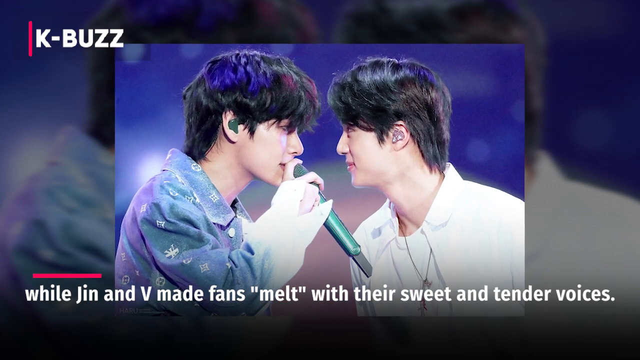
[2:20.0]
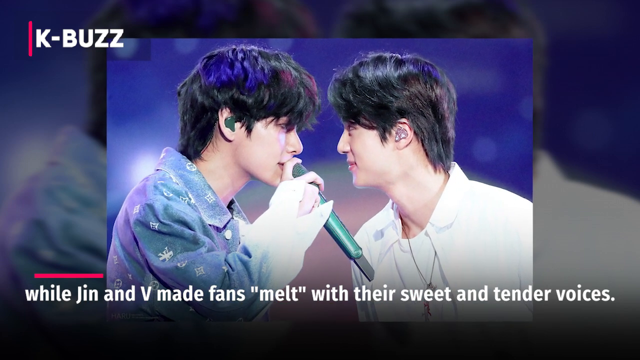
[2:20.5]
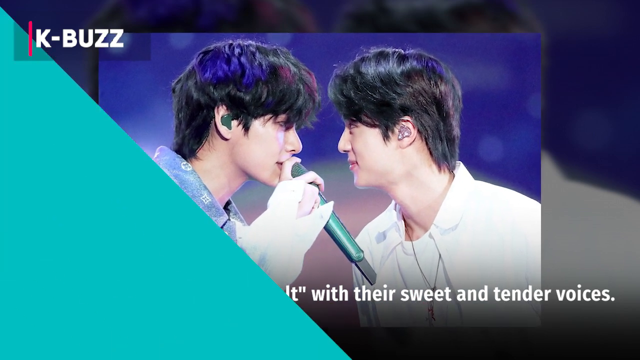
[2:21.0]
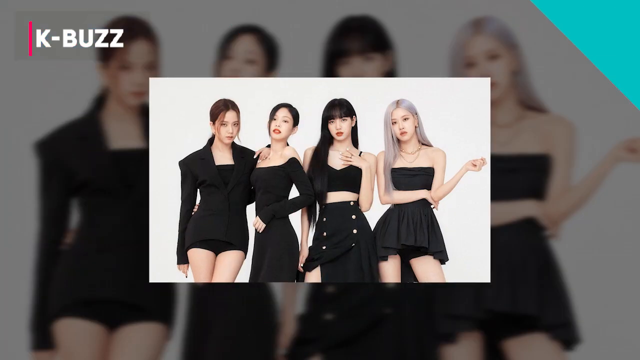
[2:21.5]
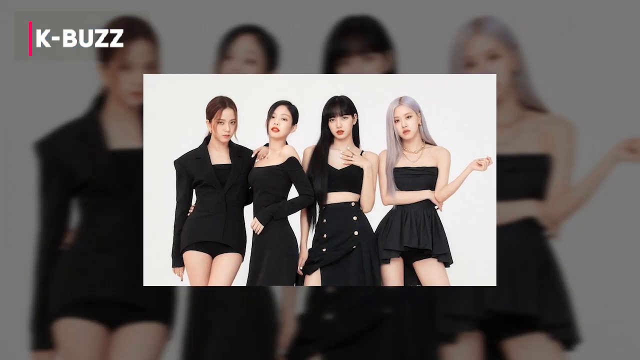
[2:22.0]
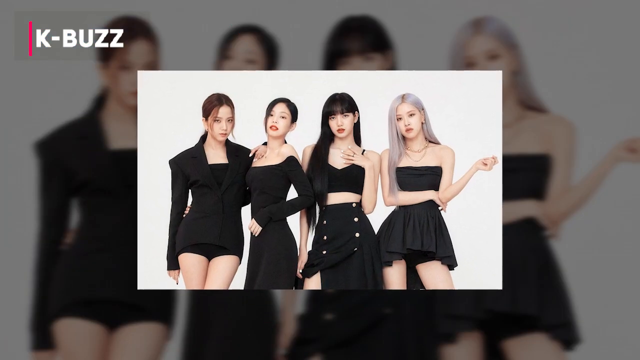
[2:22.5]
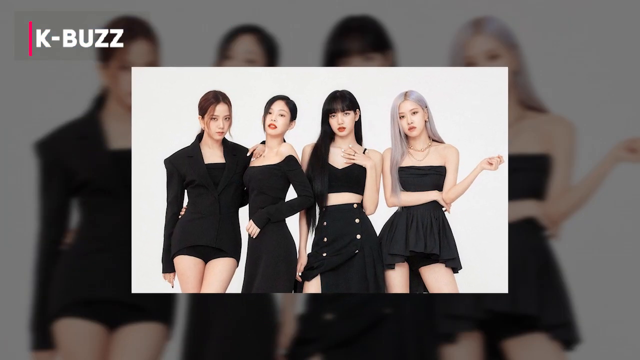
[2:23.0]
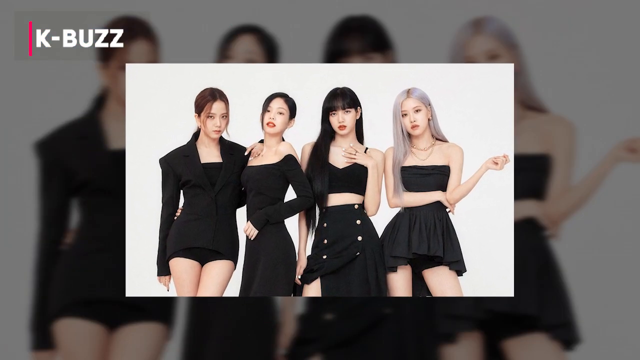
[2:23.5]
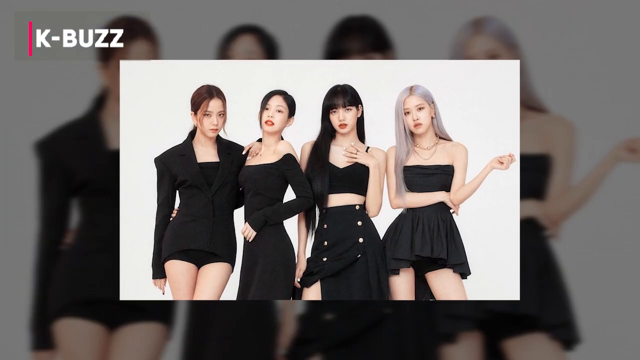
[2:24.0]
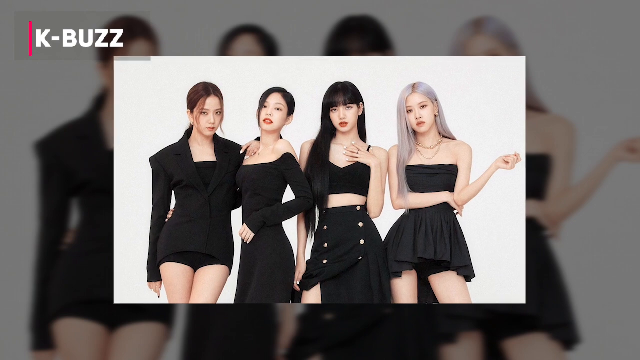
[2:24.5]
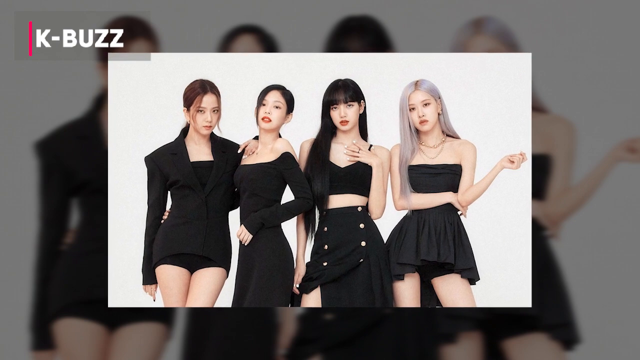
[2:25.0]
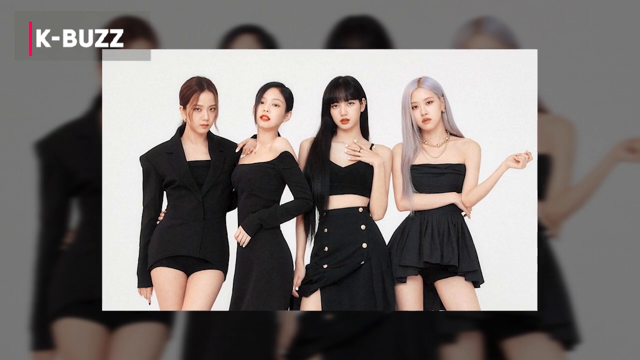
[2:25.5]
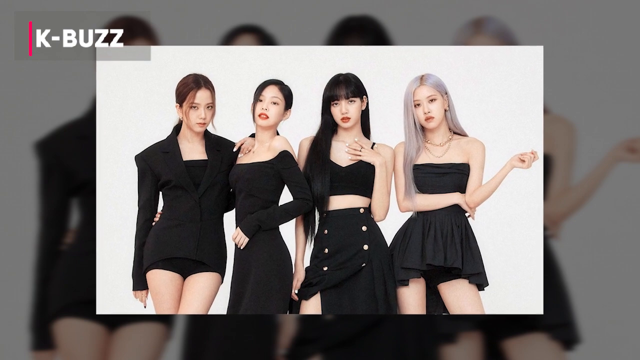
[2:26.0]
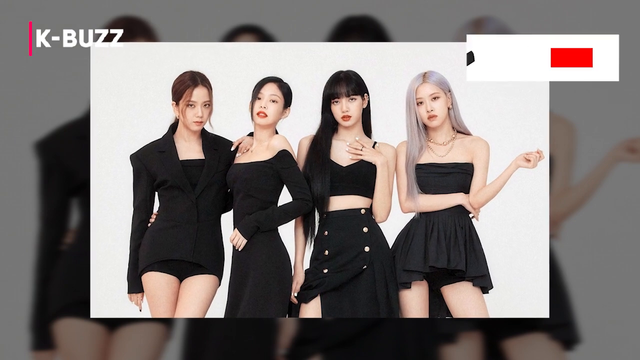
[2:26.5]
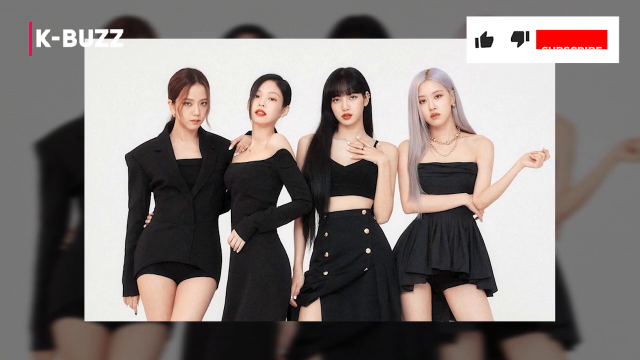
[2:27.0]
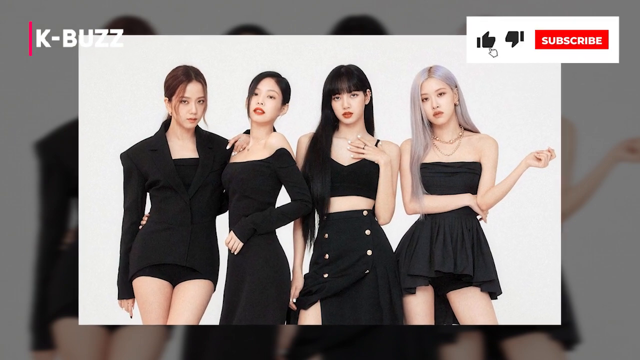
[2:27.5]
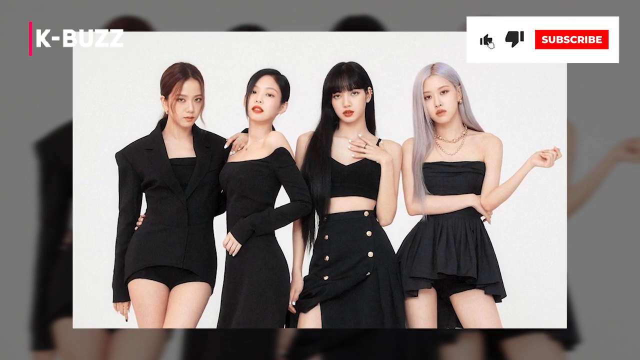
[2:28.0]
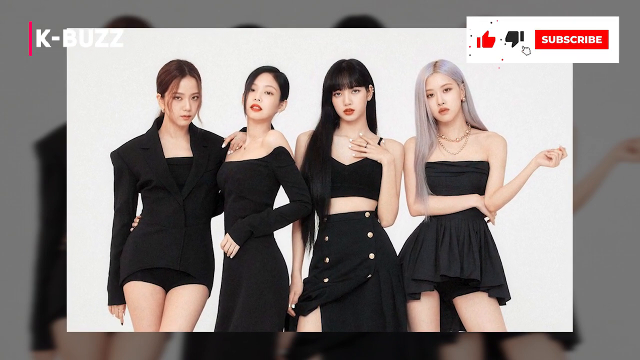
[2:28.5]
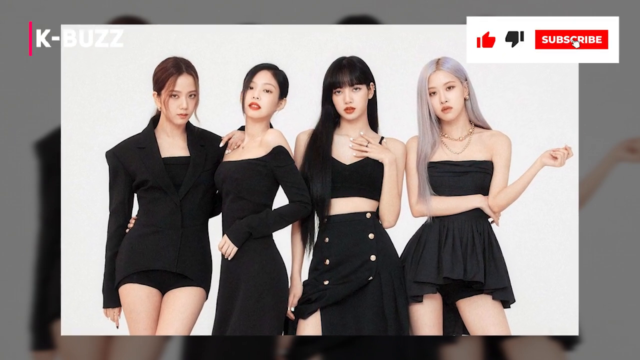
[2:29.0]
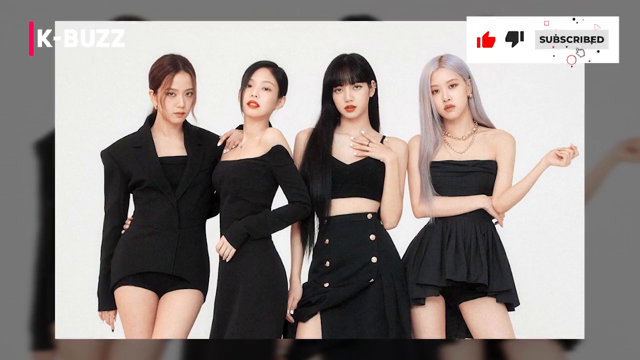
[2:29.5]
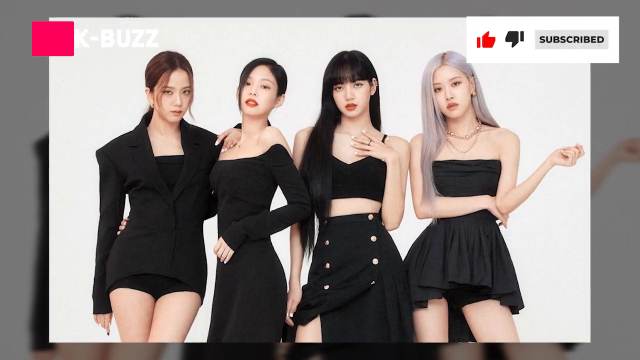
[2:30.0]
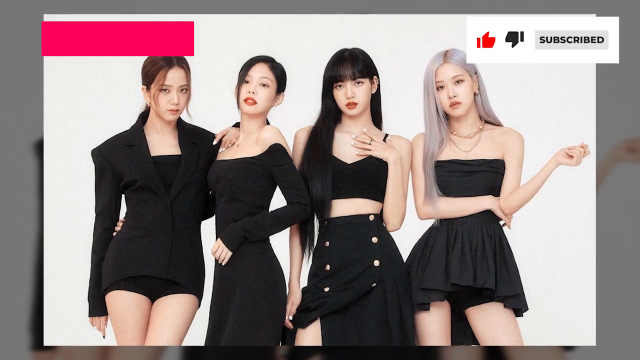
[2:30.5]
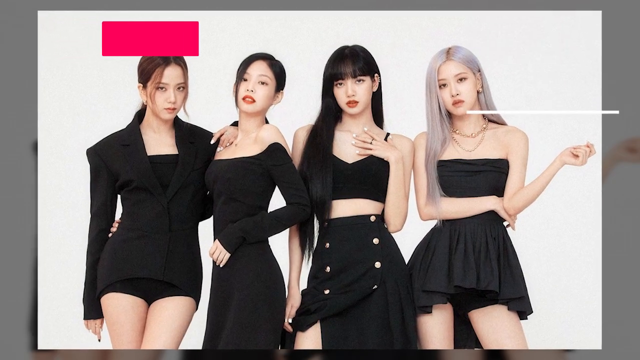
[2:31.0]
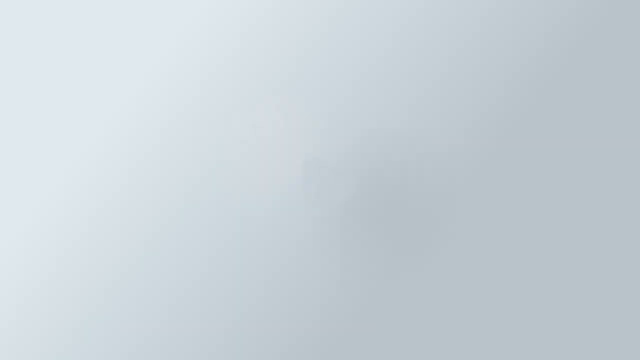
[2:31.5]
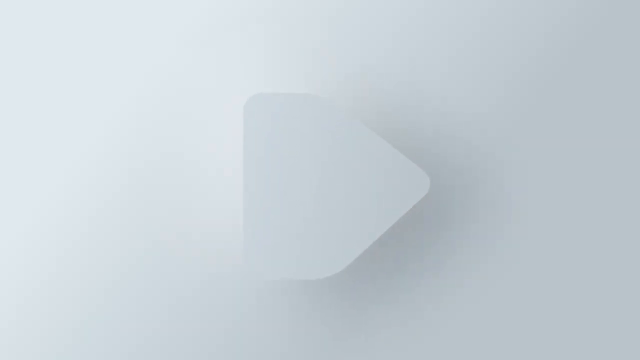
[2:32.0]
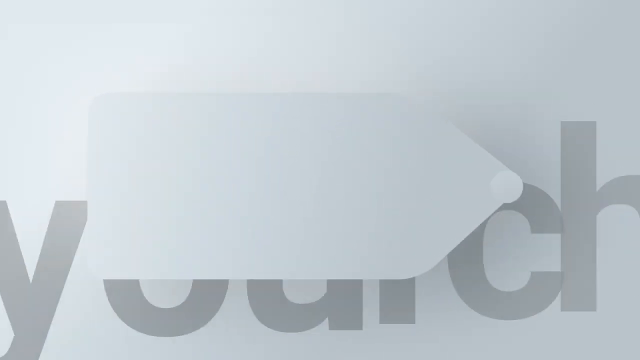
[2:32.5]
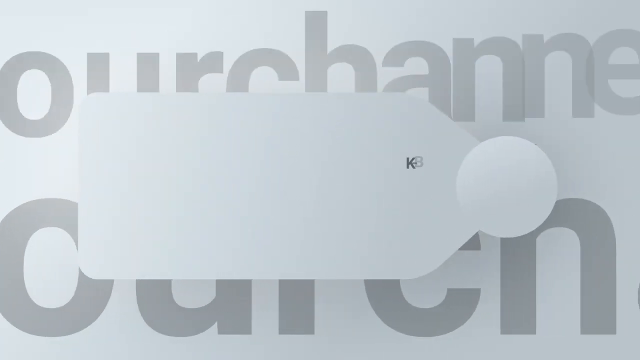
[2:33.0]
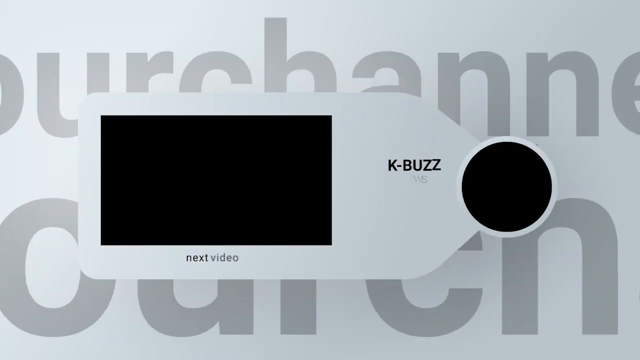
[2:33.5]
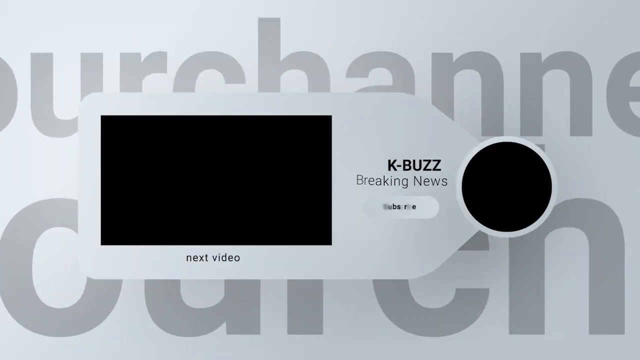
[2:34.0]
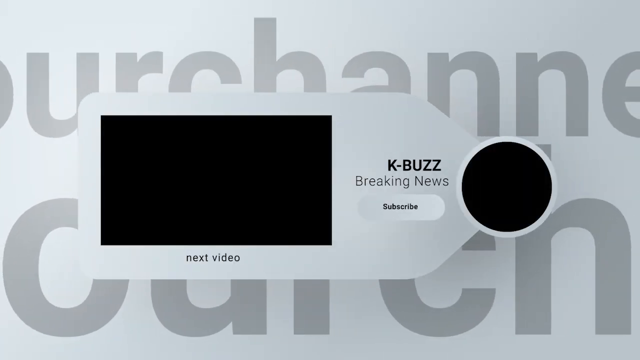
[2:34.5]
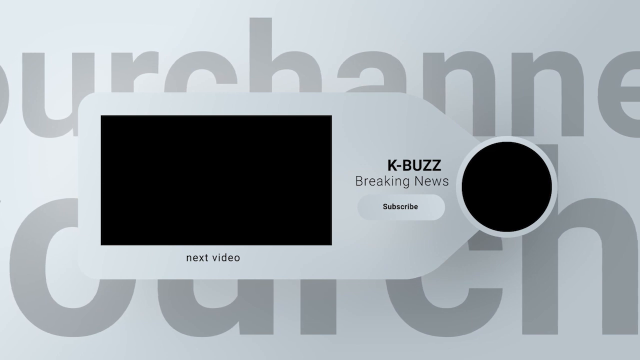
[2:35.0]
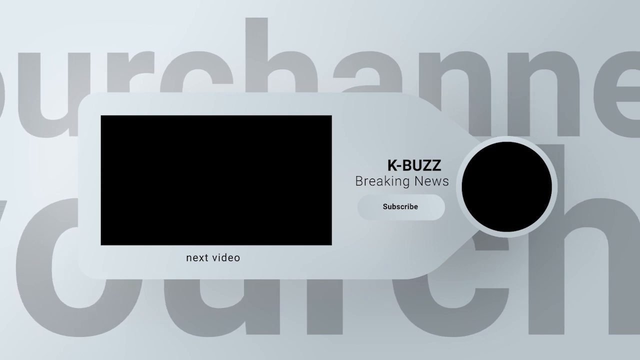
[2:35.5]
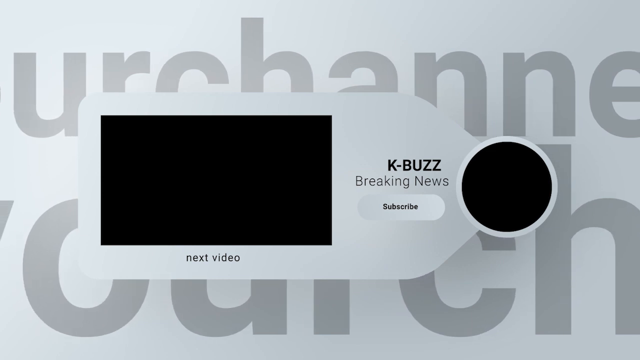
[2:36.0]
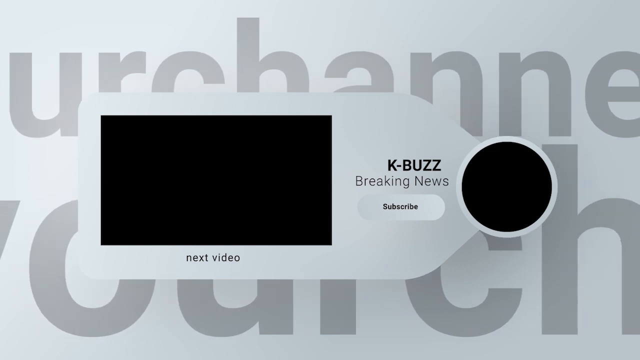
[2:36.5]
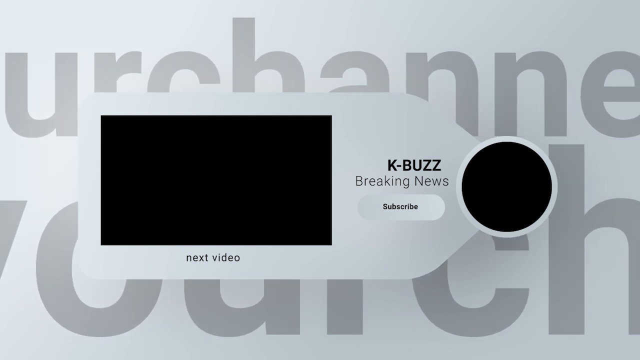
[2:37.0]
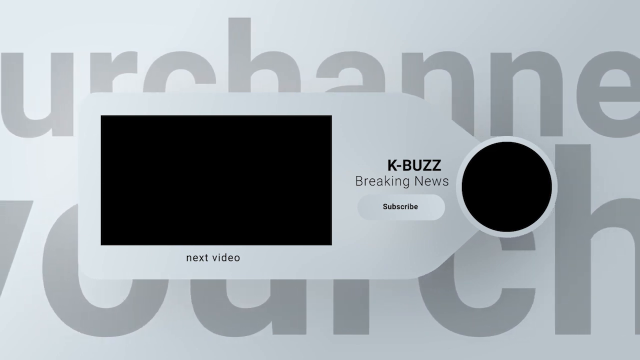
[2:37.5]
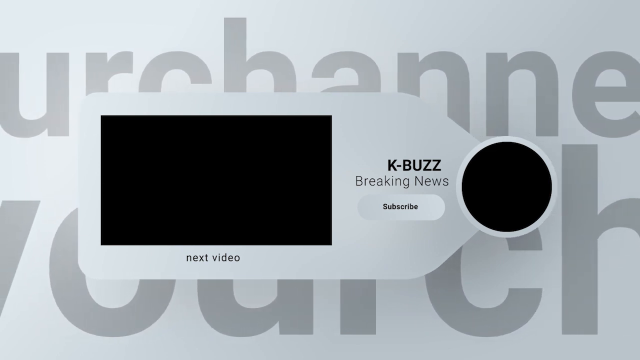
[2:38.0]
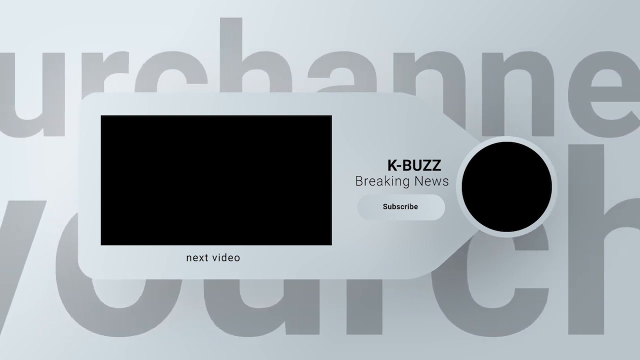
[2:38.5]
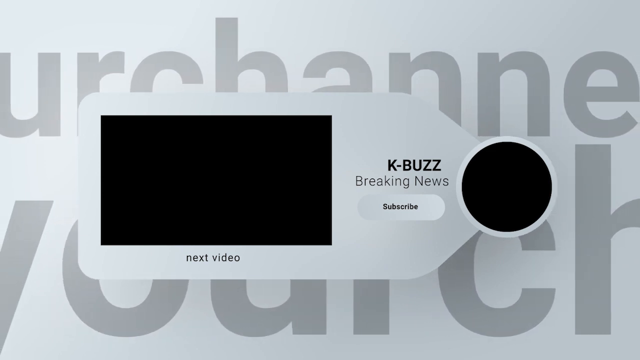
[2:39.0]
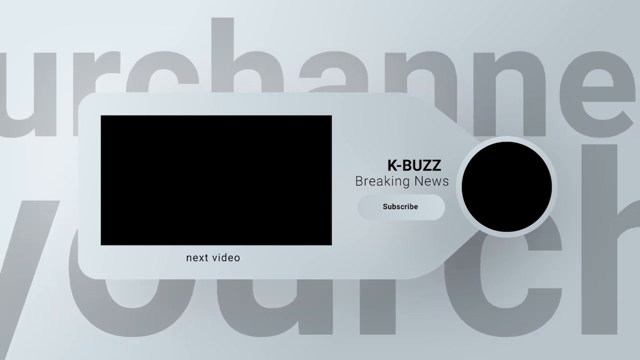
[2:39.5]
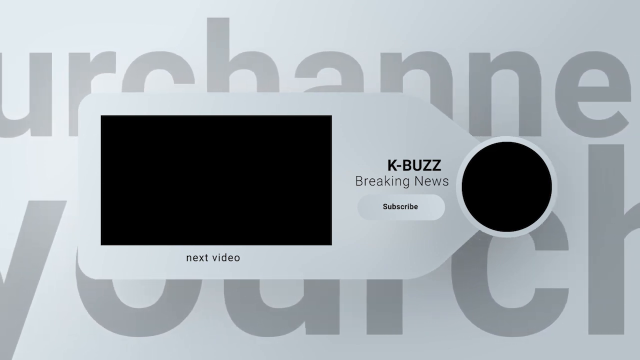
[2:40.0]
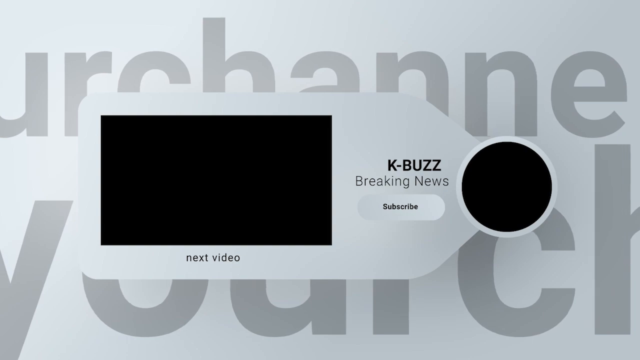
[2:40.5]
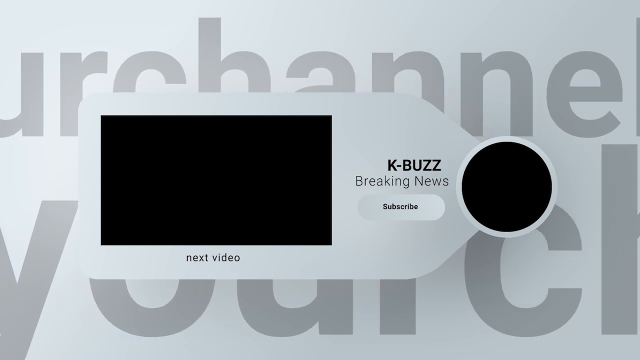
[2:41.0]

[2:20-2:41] The photo of the two members face to face remains on screen, followed by a green transition from bottom left to top right. A picture of an unidentified K-pop girl group appears. They are all dressed in black, in different styles of dresses and outfits. The one on the far left has darker brown hair tied in a ponytail; the second from the left also has her hair back in a ponytail, but it is black; the third from the left has long black hair down with bangs; and the one on the far right has her hair down, parted in the middle, silvery with black roots. At the top right, a white rectangle appears containing a smaller red rectangle with the white word "subscribe", with two black icons to the left showing a thumbs up and a thumbs down. A white cursor clicks the thumbs up icon, turning it red, then moves over and clicks subscribe. The subscribe box turns from red to gray, and the white text changes to black "subscribed". The video then transitions to a closing screen with a space for the next video in the center and the icon for the channel's photo.